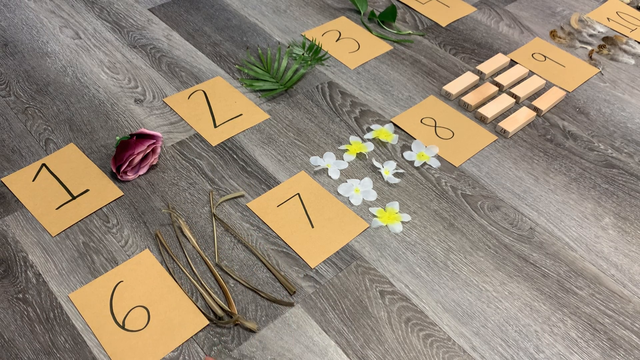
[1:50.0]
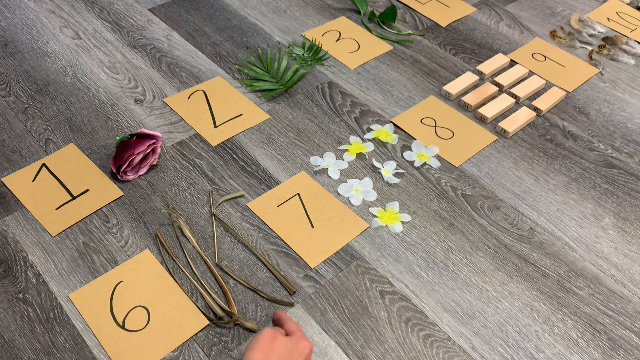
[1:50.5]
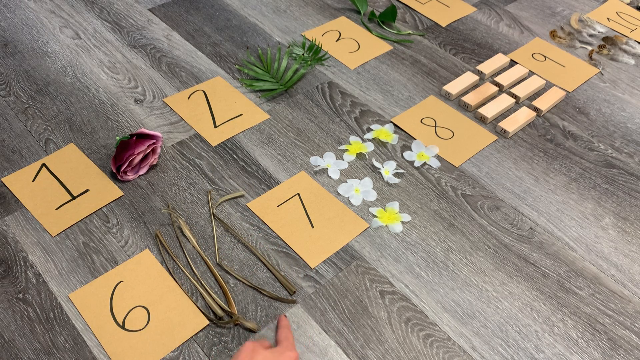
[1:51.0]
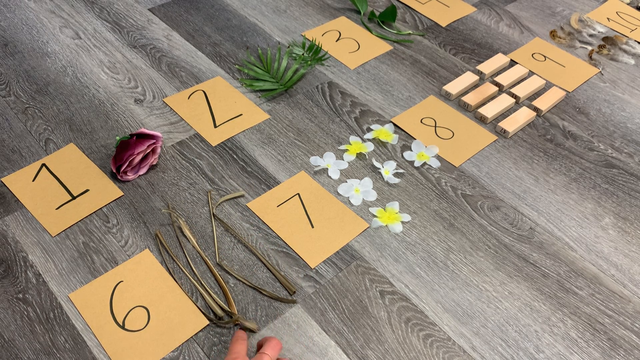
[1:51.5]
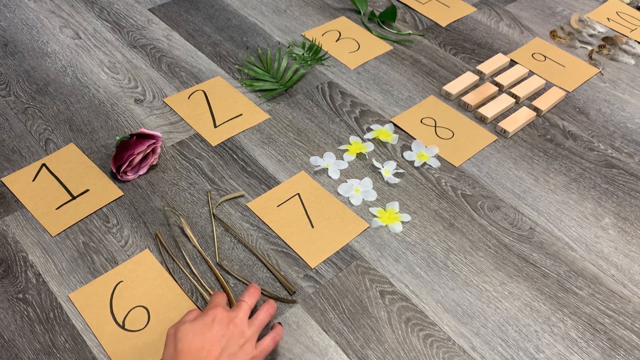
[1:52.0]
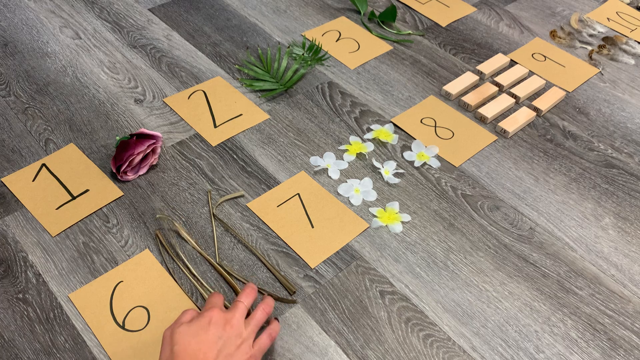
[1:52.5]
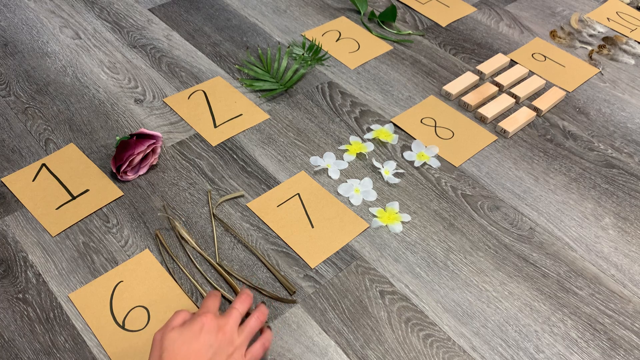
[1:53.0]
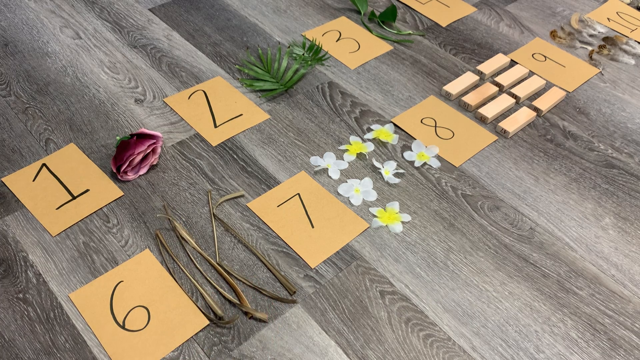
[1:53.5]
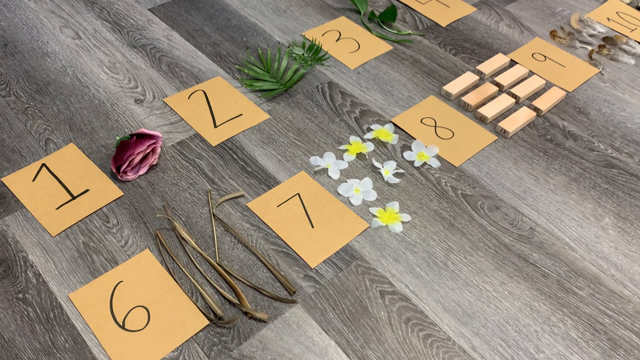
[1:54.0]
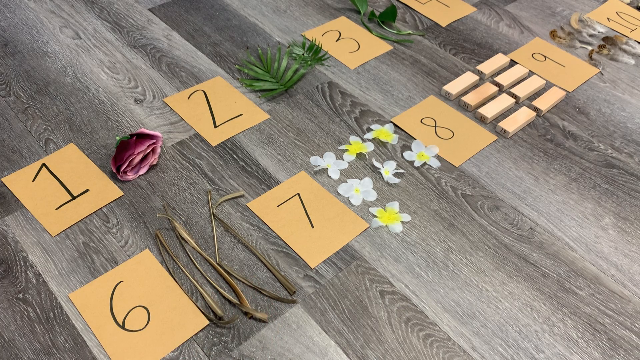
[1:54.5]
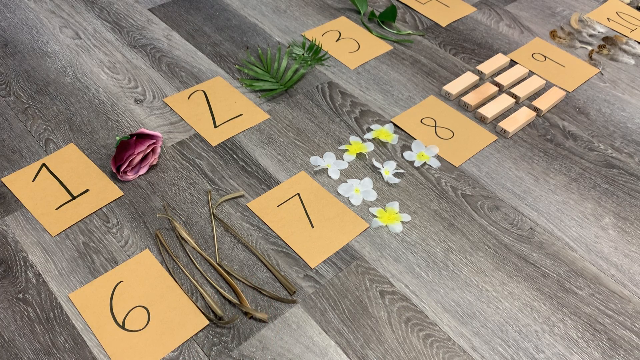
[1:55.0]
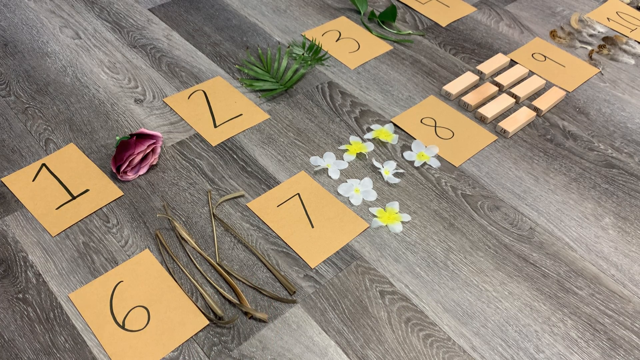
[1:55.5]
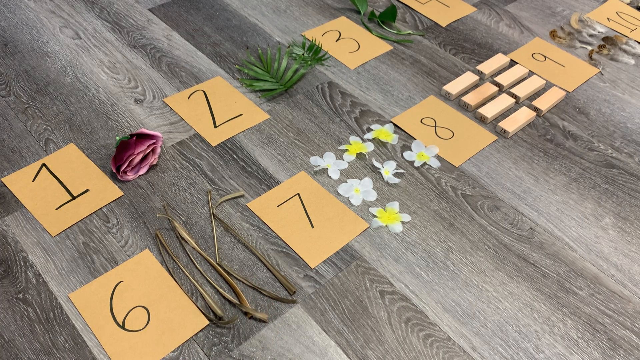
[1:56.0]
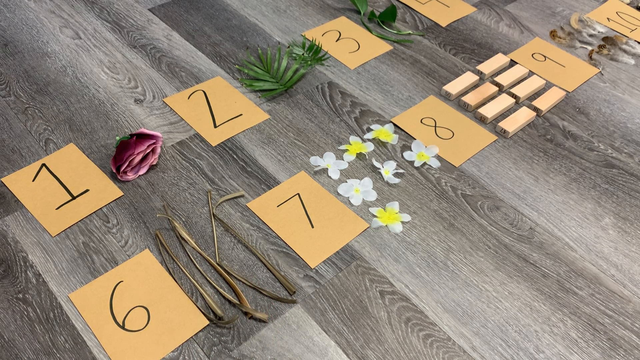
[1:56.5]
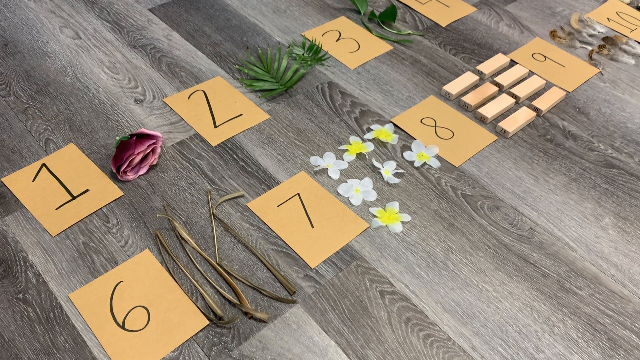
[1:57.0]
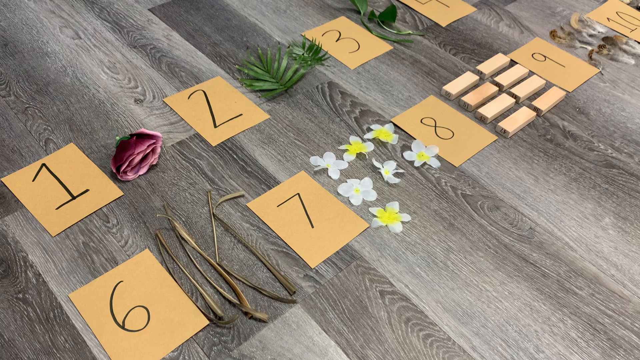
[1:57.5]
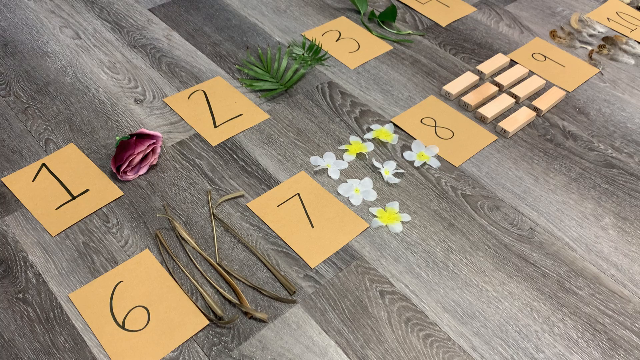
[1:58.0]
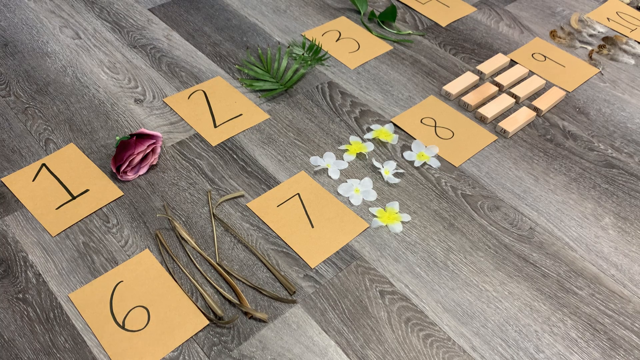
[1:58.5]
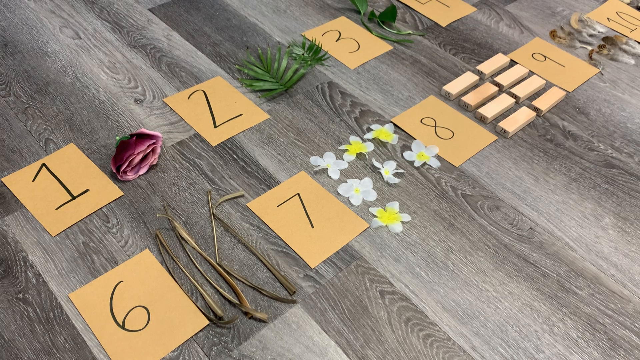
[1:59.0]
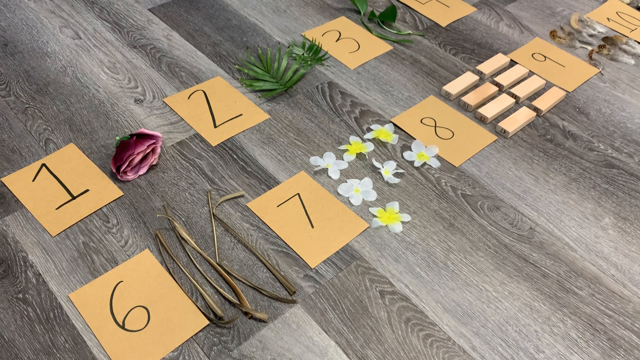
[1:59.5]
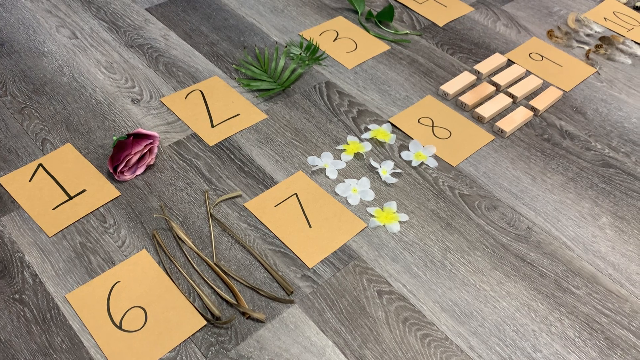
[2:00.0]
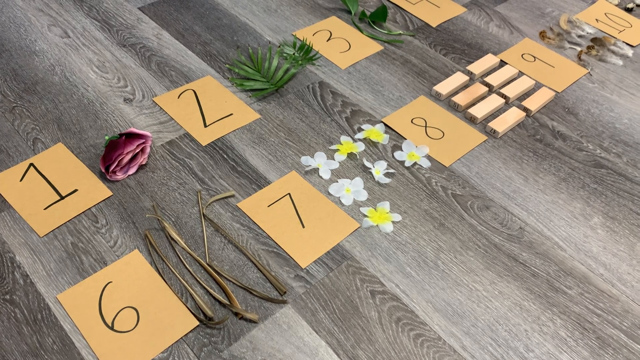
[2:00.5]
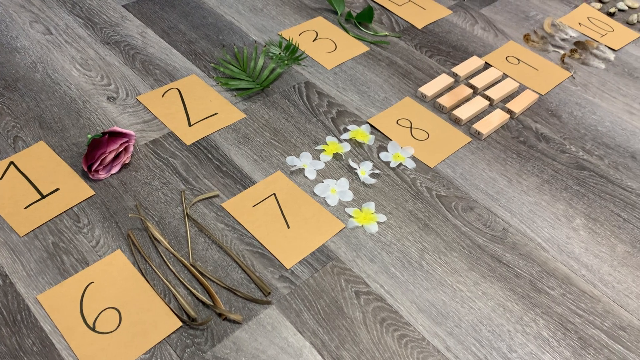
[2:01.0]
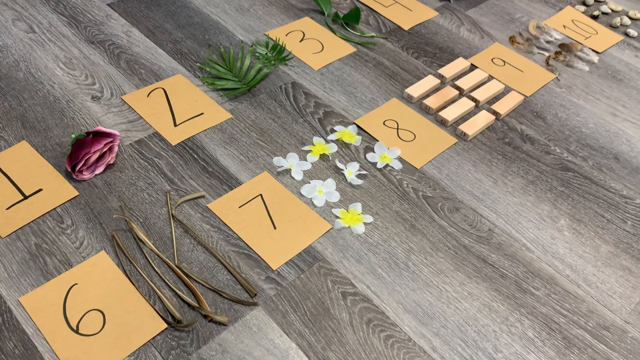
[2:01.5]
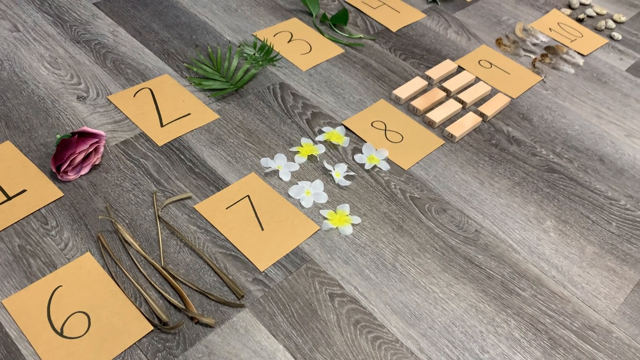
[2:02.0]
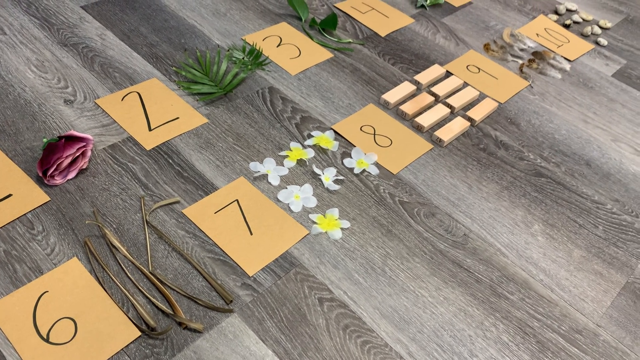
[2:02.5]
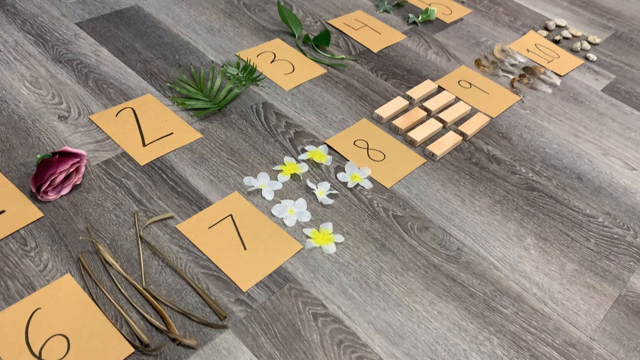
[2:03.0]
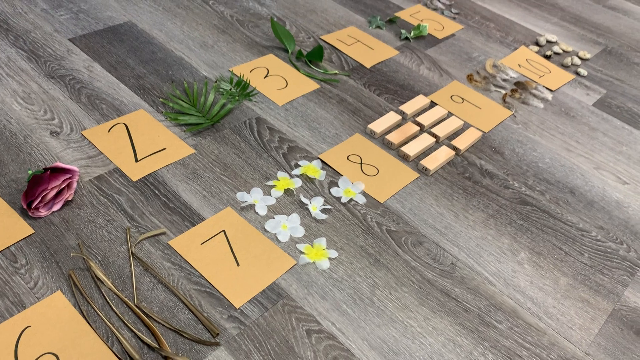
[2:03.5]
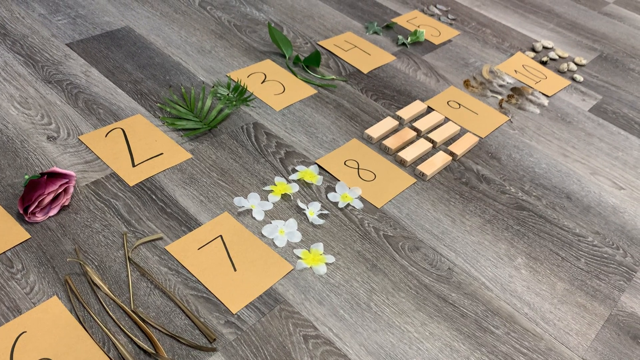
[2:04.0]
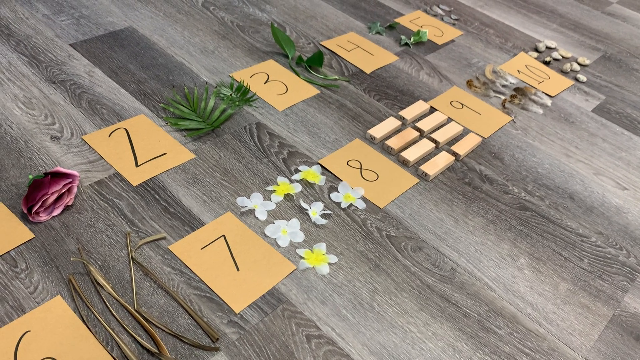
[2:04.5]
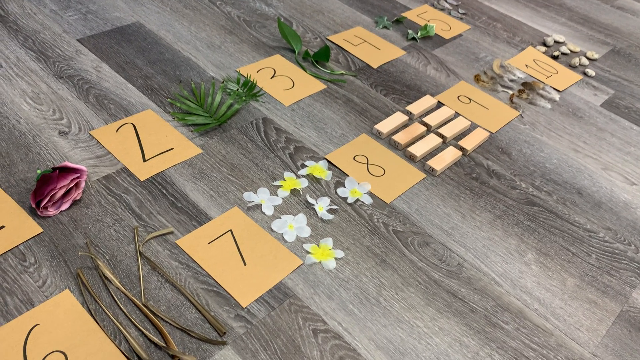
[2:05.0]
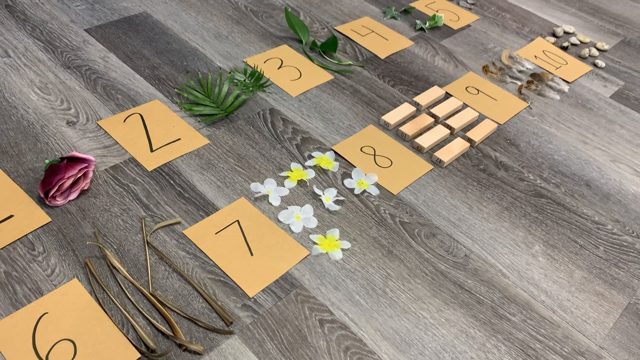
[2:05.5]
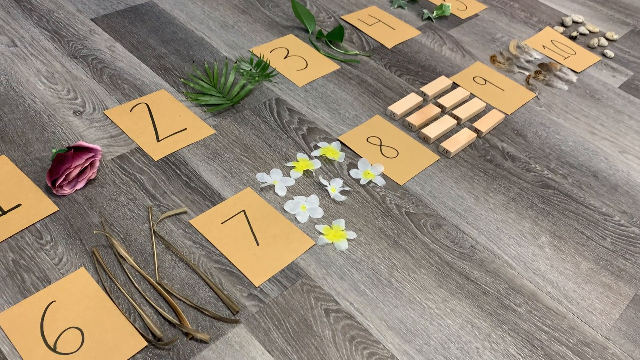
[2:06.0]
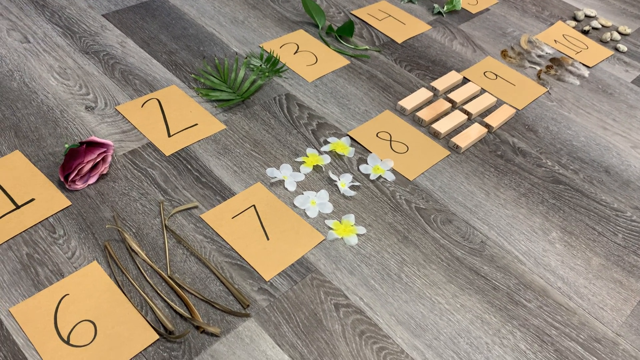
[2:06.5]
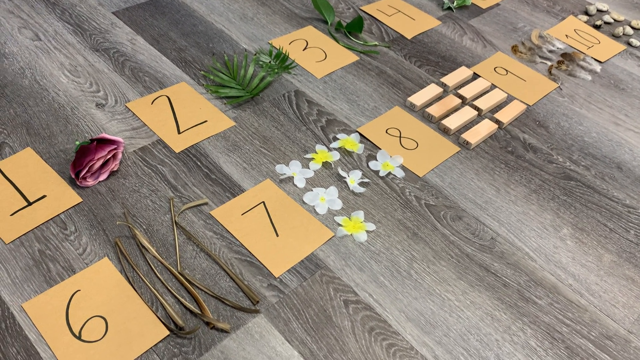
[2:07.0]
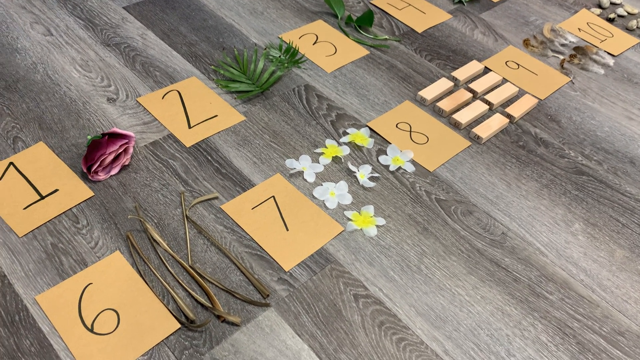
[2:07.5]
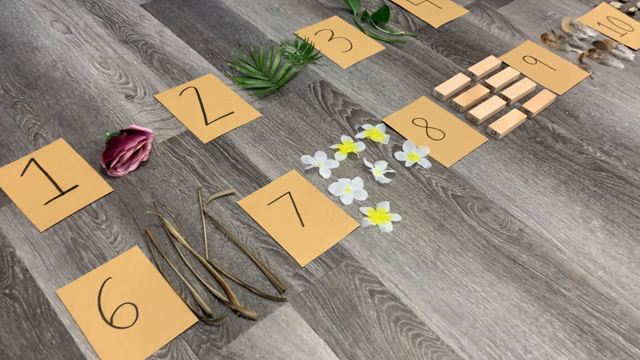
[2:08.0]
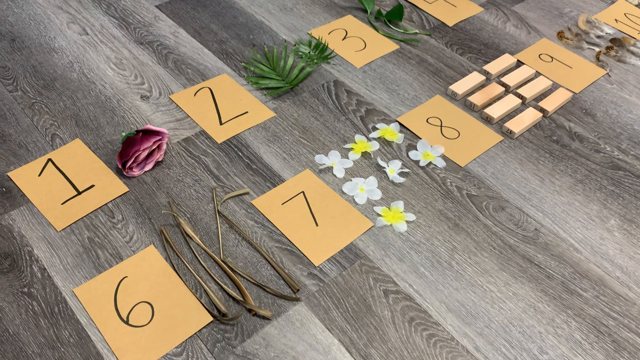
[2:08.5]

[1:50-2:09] The same hand with black nail polish returns to the sticks next to card 6 and briefly pushes the middle stick towards the second stick, seemingly rearranging the sticks so they look presentable on the floor. The camera then pans right again, showing all of the cards, including cards 5 and 10, then pans back to the original frame showing cards 1, 2, 3, 6, 7 and 8. All the other items stay where they are, the lighting and the number of items stay the same, and no other people appear.